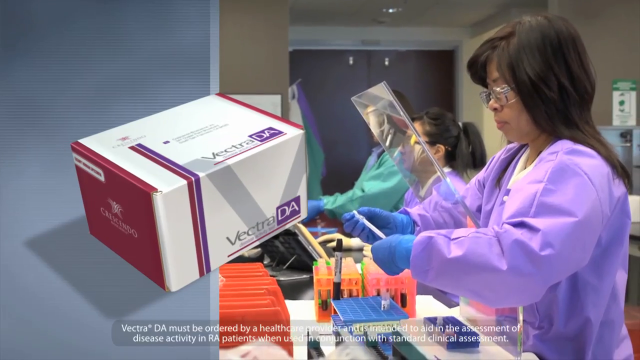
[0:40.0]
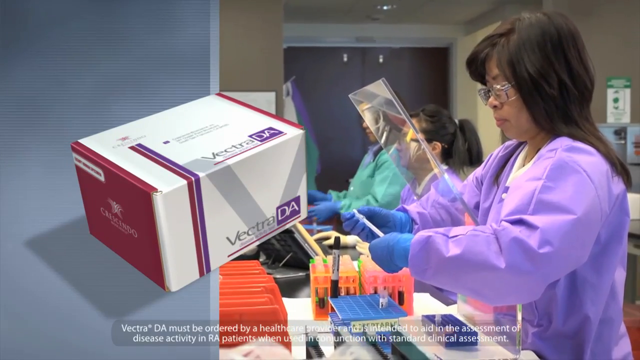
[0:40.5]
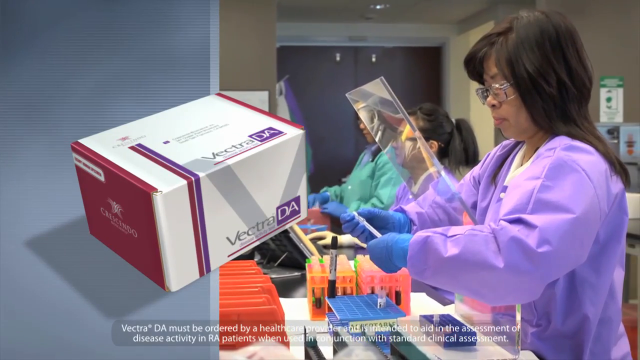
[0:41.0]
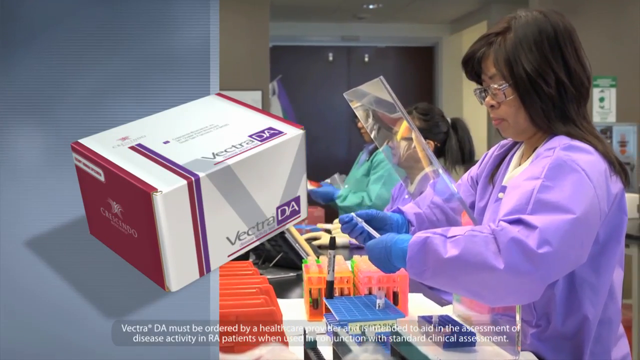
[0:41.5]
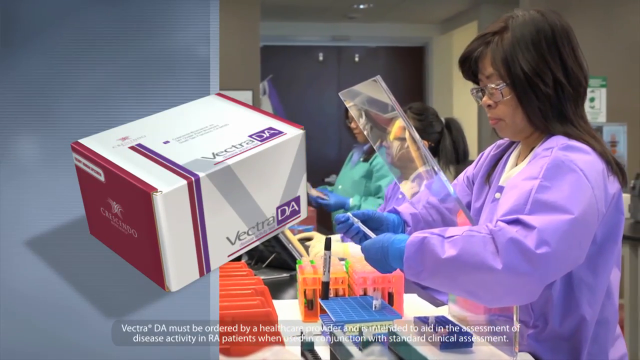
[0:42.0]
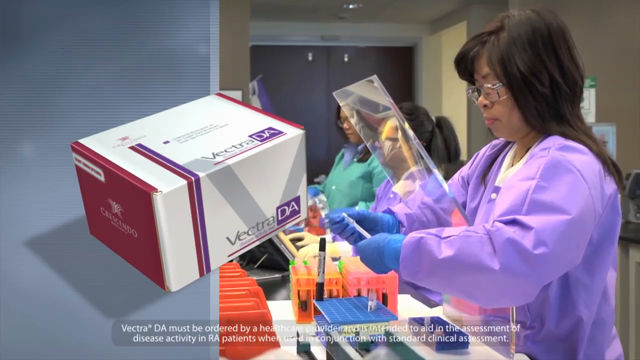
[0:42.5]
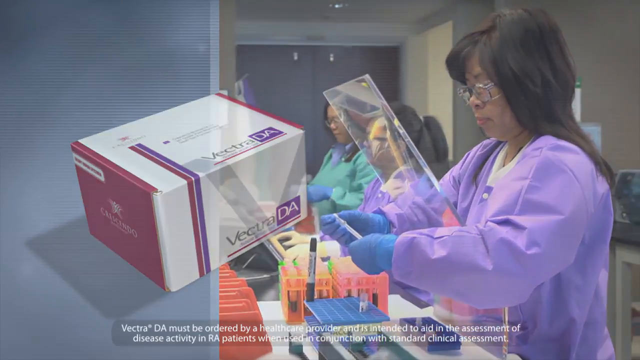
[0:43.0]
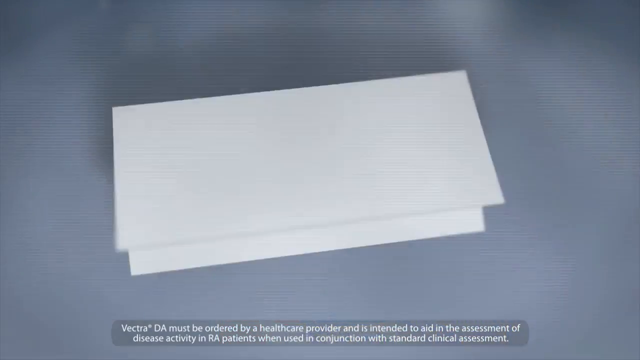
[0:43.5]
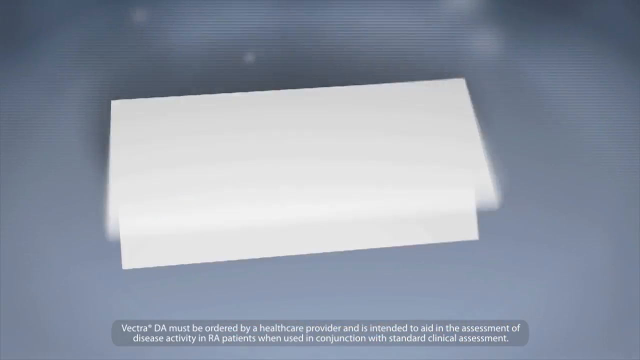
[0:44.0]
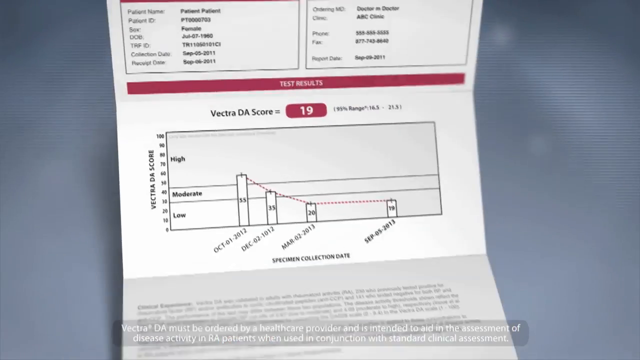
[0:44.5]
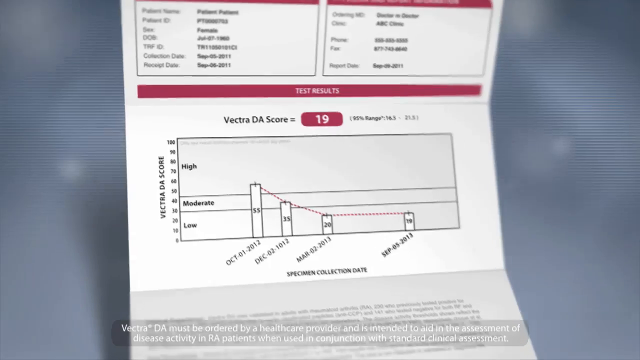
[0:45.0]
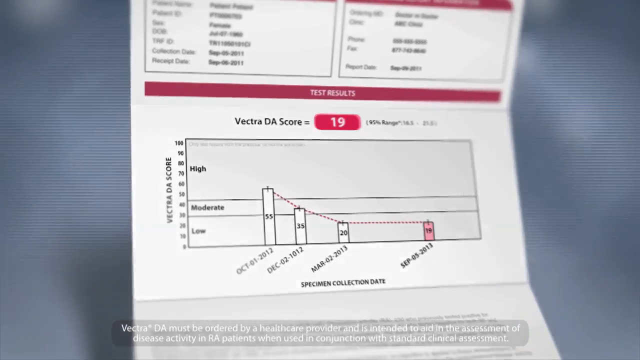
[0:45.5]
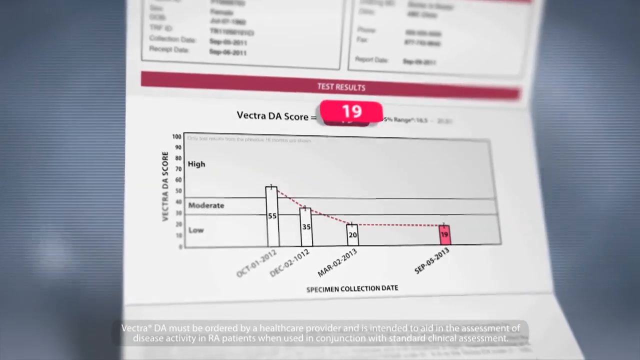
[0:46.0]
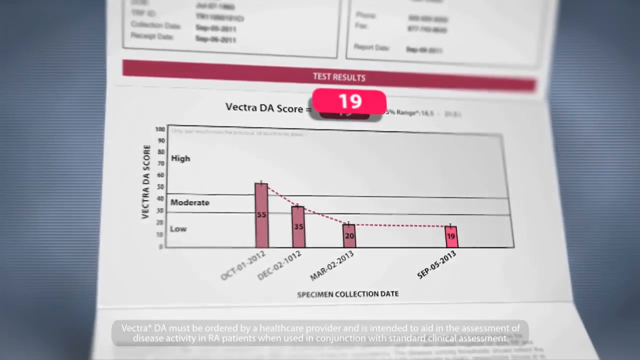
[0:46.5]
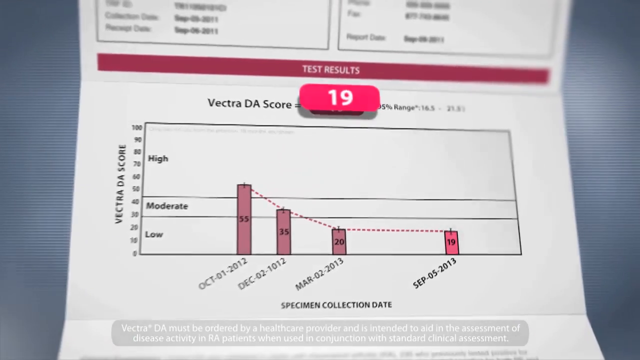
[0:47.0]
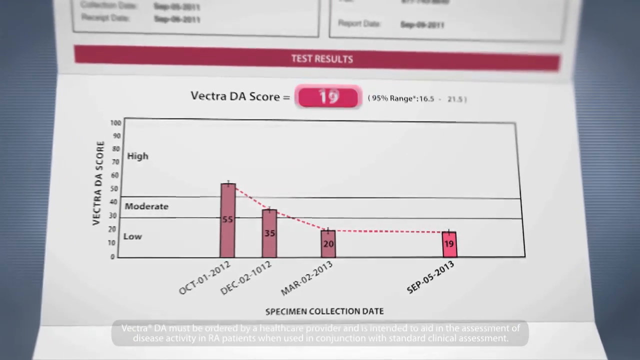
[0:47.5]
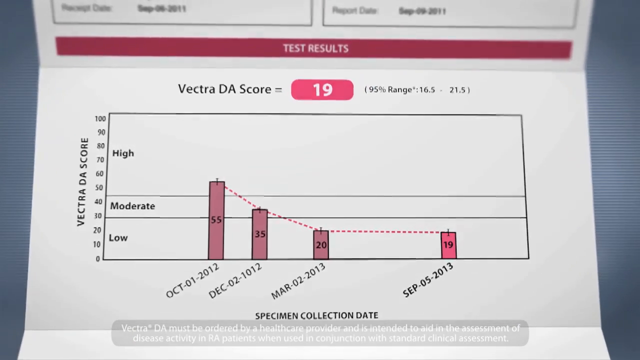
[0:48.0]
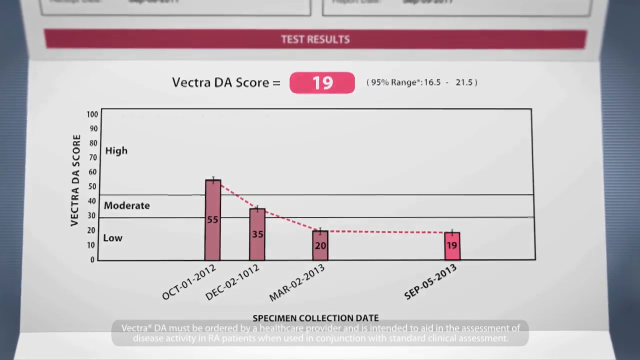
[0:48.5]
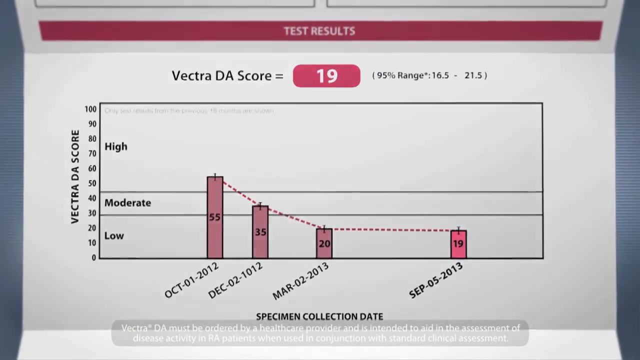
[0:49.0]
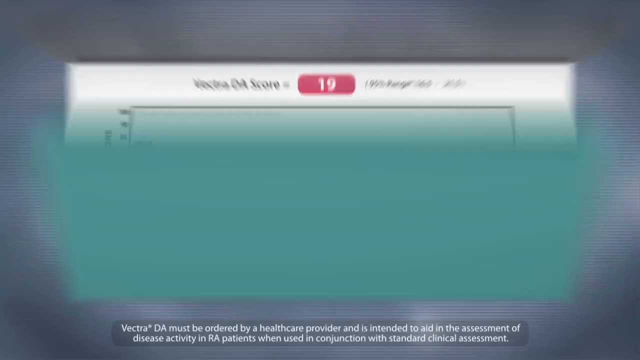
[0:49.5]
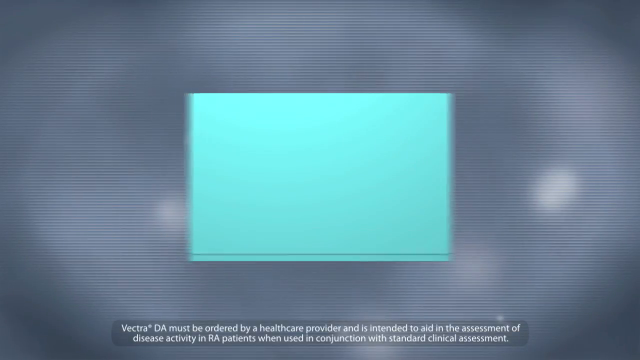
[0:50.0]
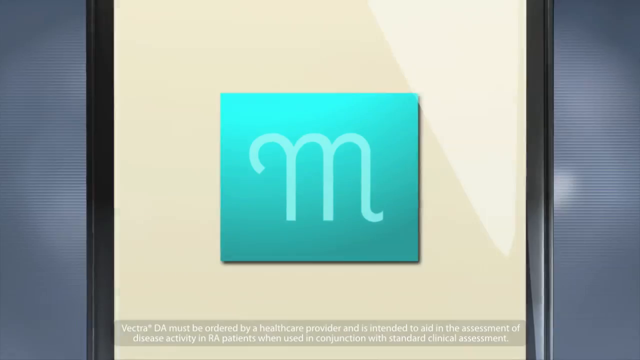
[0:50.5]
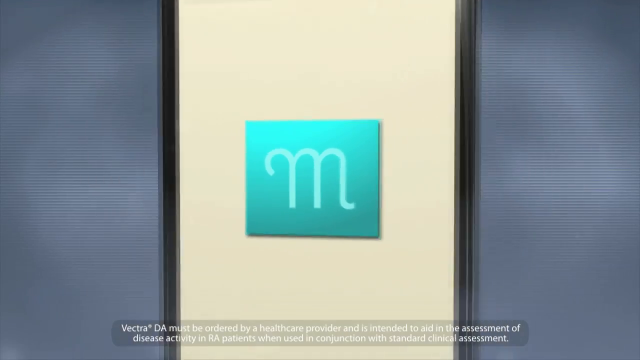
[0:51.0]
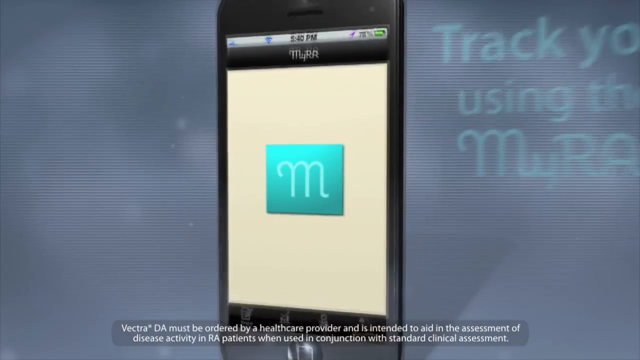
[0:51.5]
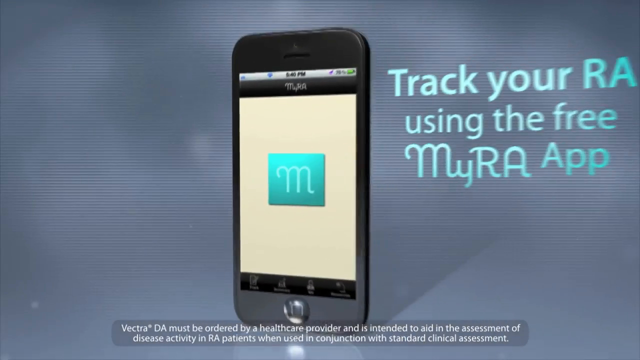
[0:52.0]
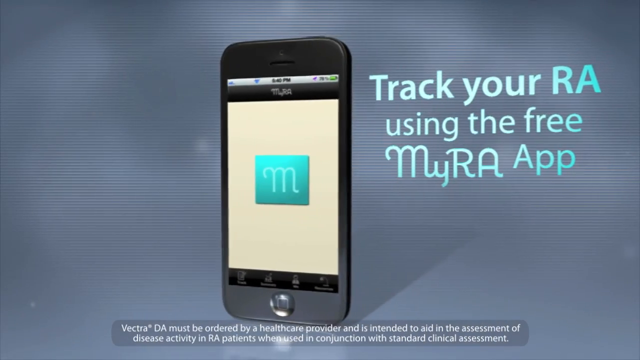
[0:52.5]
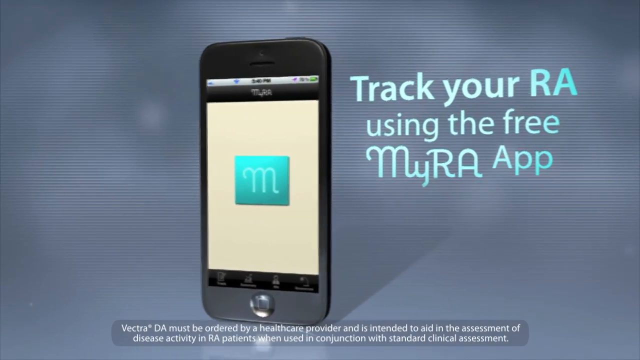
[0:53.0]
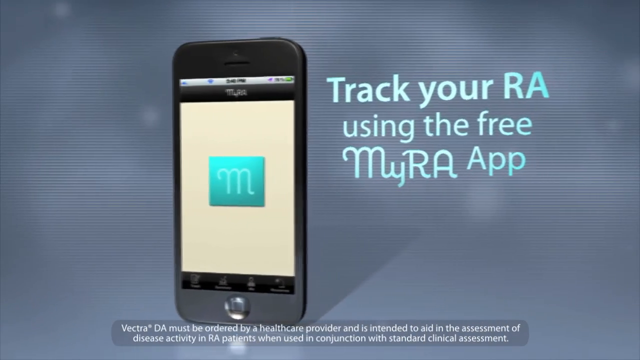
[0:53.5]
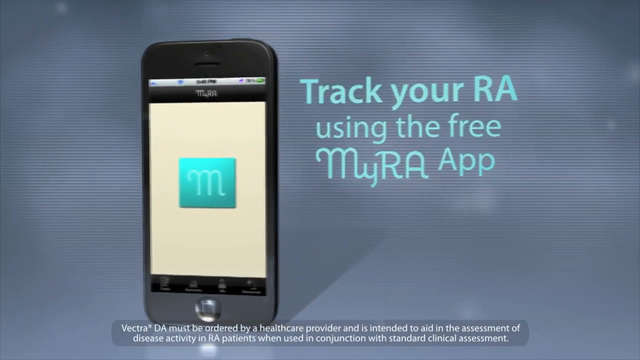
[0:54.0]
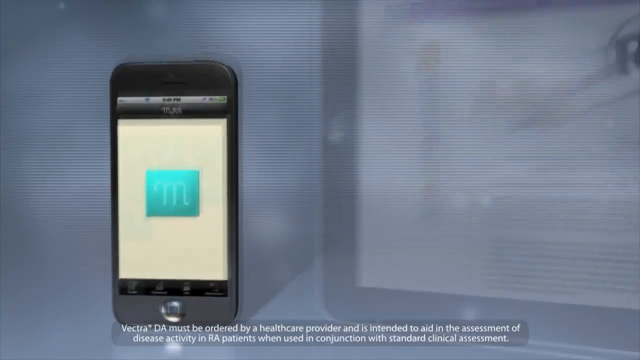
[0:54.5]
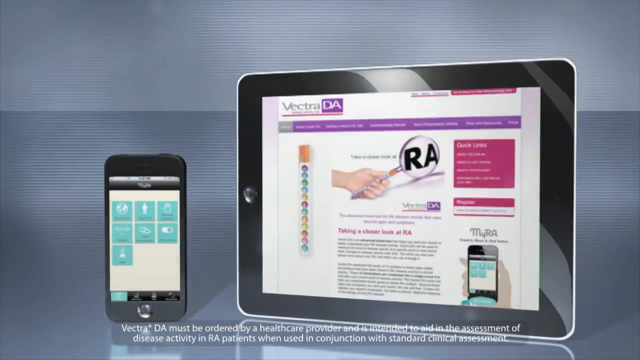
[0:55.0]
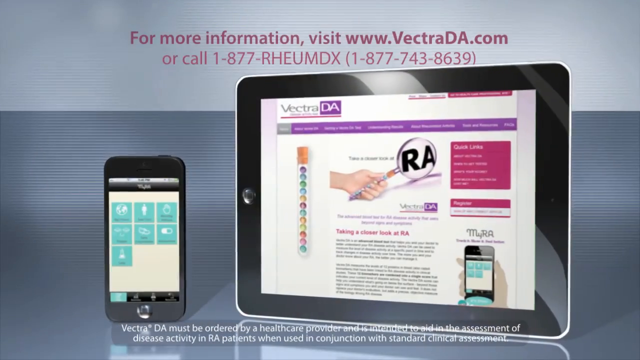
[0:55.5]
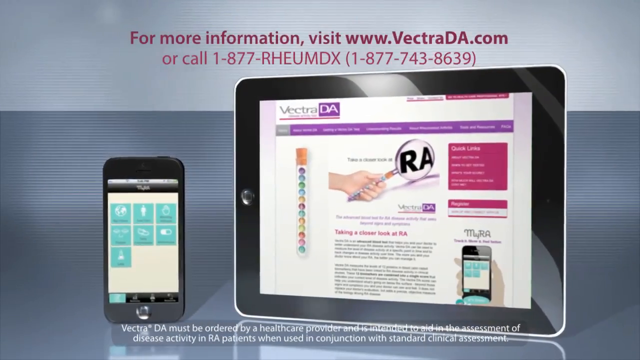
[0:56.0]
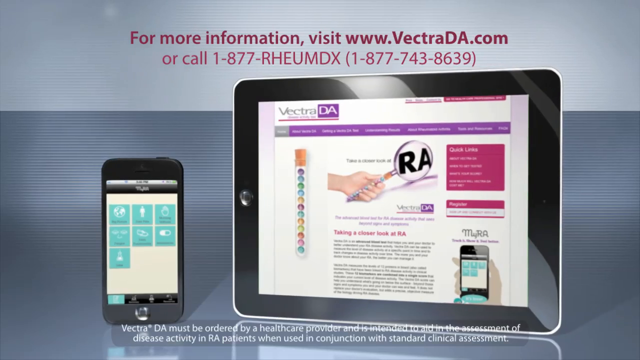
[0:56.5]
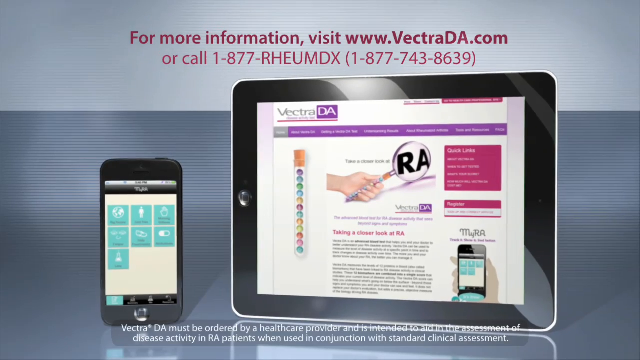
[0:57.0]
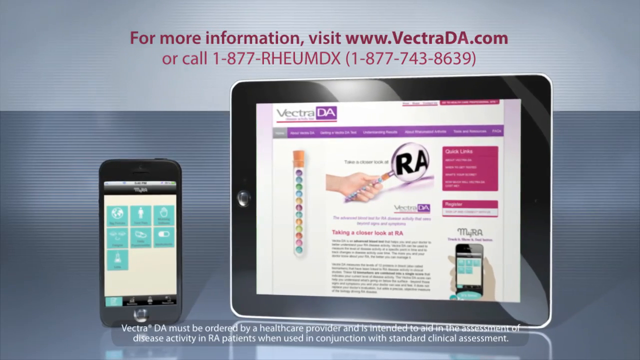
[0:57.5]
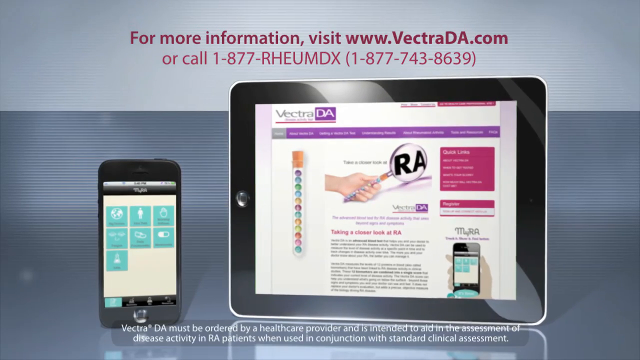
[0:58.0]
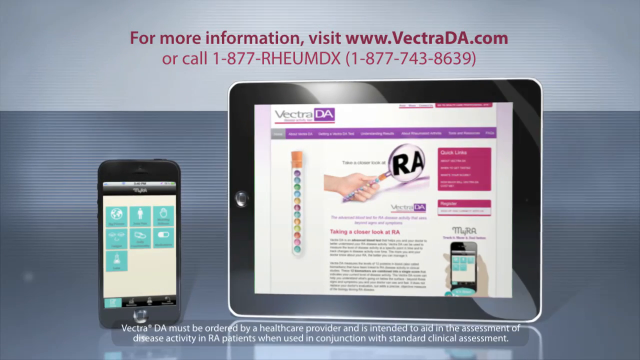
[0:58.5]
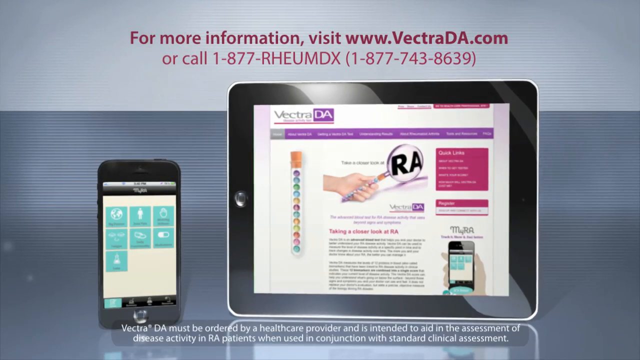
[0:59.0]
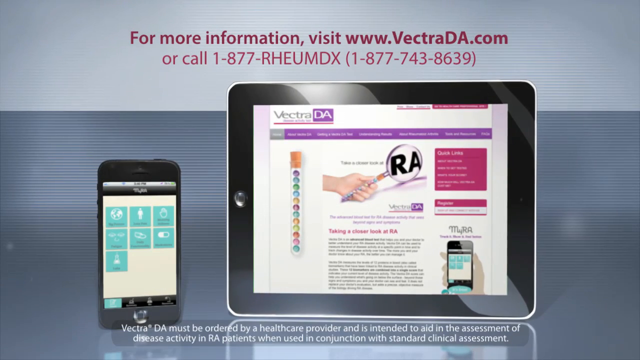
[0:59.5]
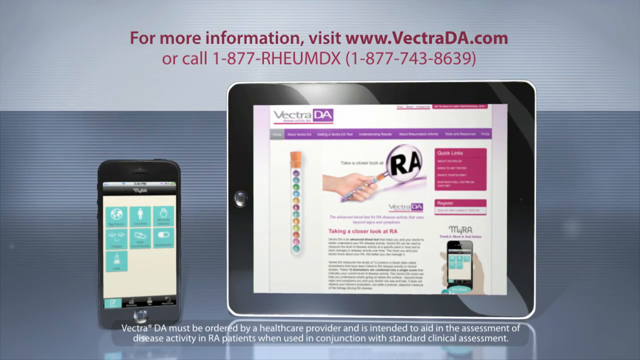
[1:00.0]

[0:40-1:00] A woman wearing a purple outfit and blue gloves appears to be in a lab, with some lab equipment and some people standing next to her. A box reads "crescendo Vectra DA" and has a red and purple stripe throughout it. A gray banner at the bottom has white text reading "Vectra DA must be ordered by a health care practitioner is intended to aid in the assessment of disease activity in RA patients when used in conjunction with standard clinical assessment." A paper pops up showing "Vectra DA score 19" with test results: high, moderate and low, and the dates October 1st, 2012; December 2nd, 2012; March 2nd, 2013; and September 5th, 2013. It shows that the 95 range is 16.5 to 21.5. The paper closes. A phone then shows a little blue box that says "m" and teal text reading "track your RA using the free myRA app." A tablet shows the Vectra DA website, with text above it reading "for more information visit www.vectrada.com or call 1-877-RU-MDX 1-877-743-8639."